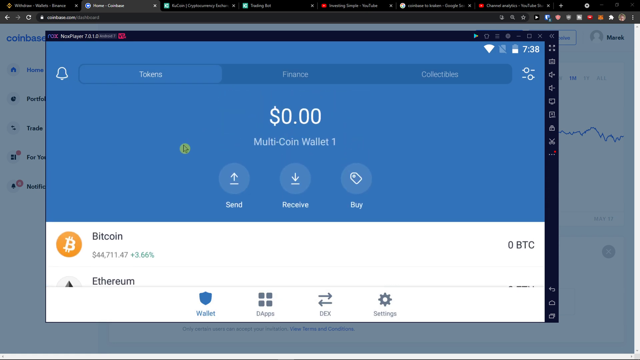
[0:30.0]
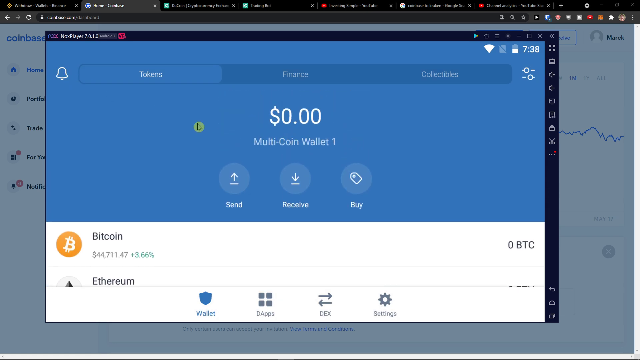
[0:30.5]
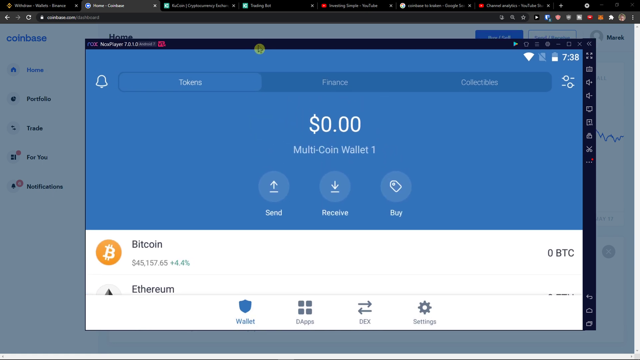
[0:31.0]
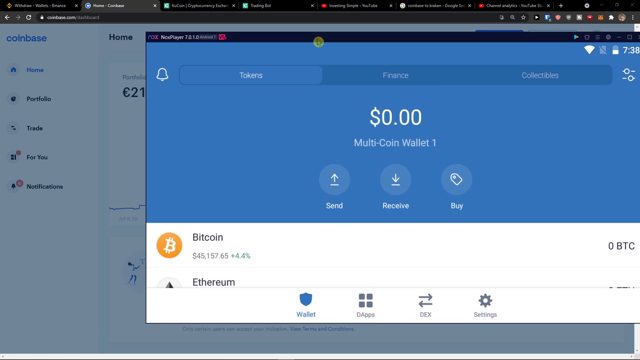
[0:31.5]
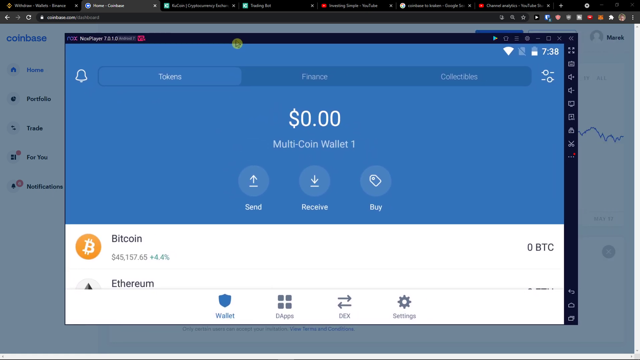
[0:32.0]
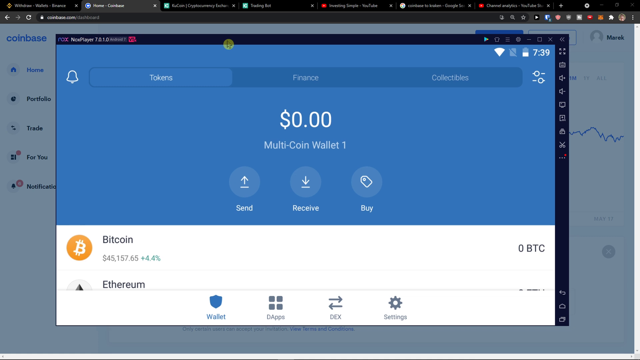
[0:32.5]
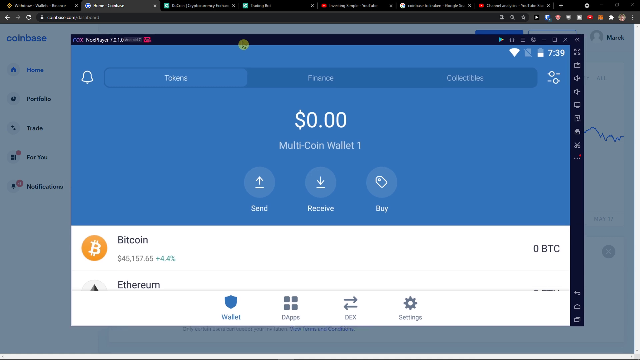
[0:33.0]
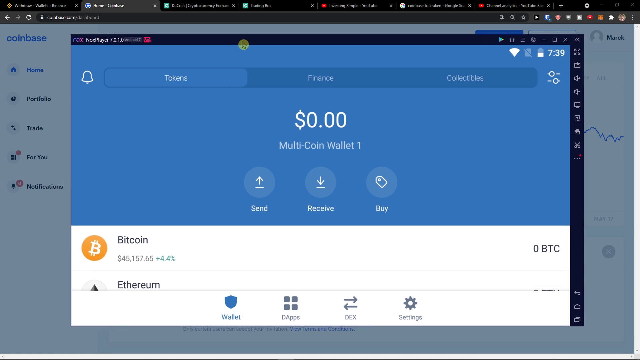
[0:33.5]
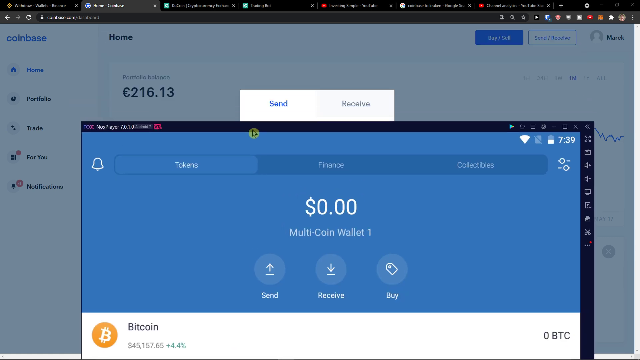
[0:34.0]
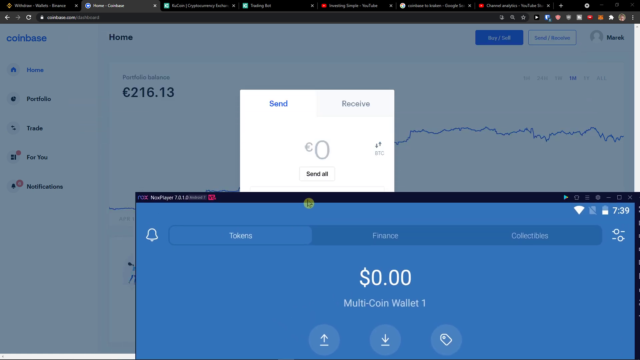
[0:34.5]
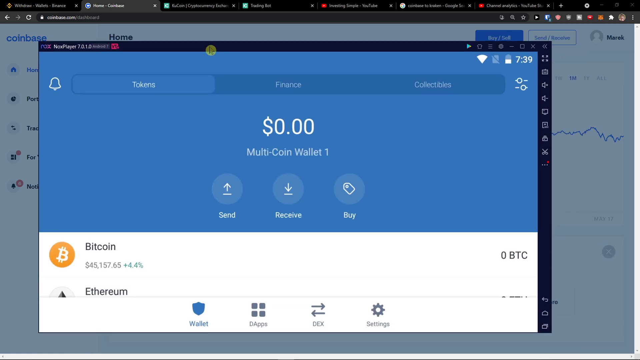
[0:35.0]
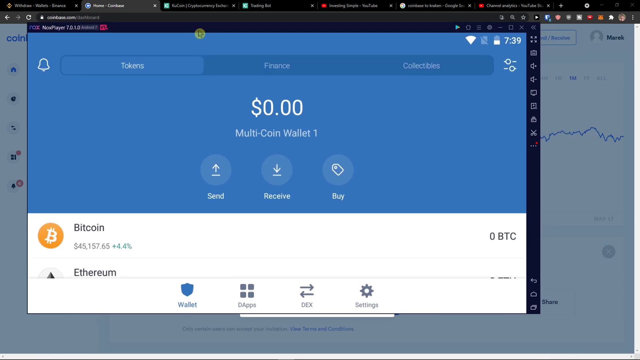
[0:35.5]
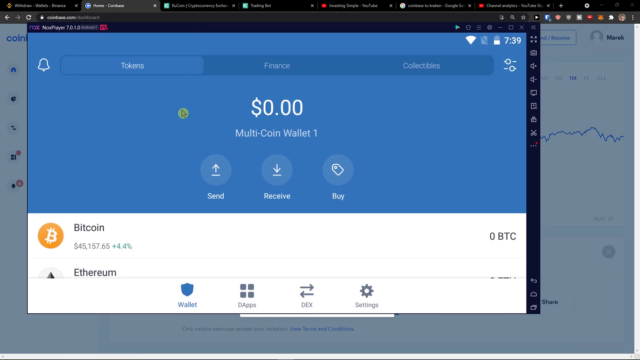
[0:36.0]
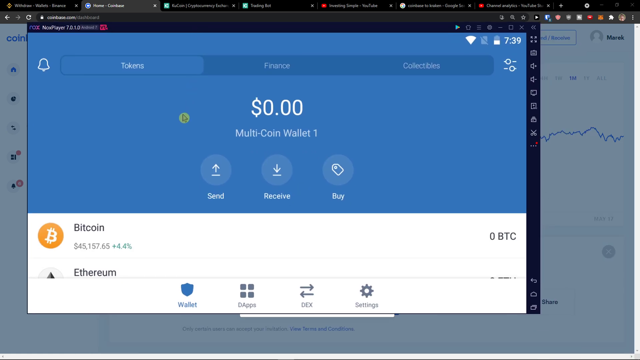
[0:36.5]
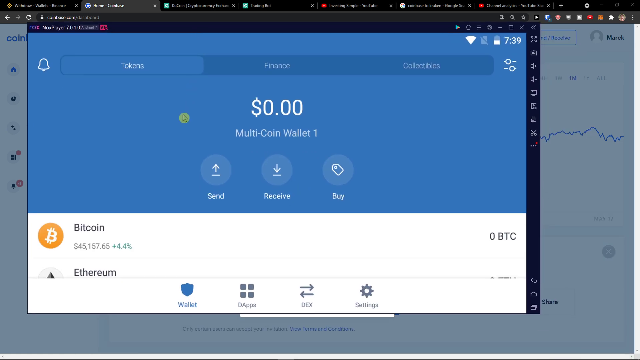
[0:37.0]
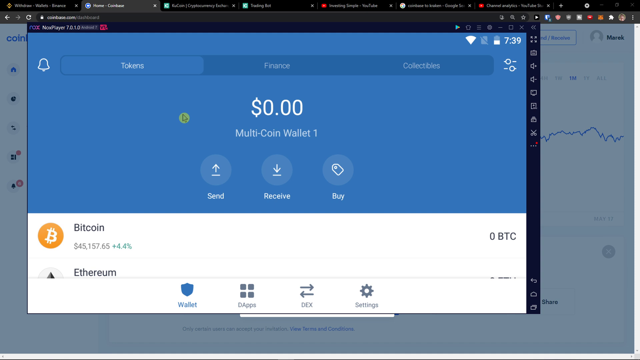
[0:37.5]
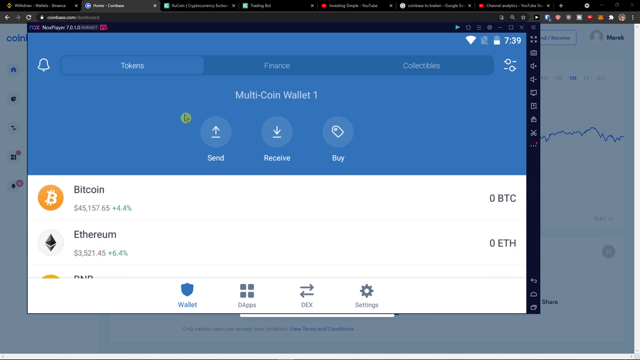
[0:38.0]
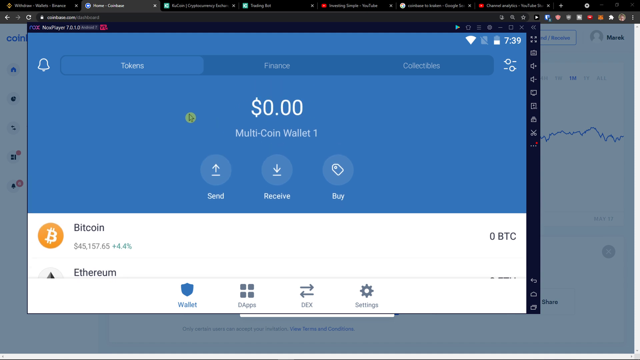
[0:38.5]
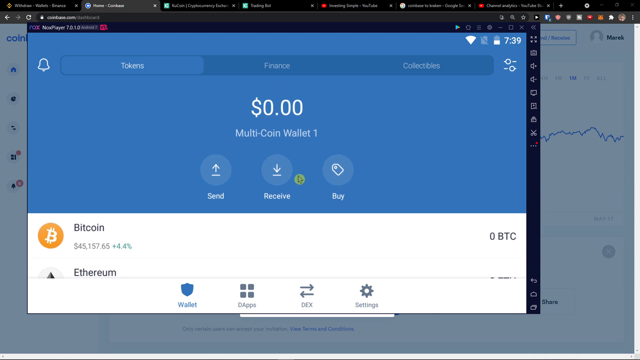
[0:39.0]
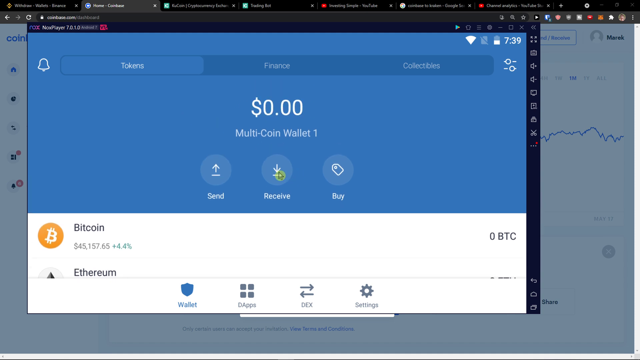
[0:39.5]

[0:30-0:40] A window within a window is shown: an unused window in the back apparently says "Coinbase", and a bigger window in front is the one being worked in. Seemingly using the mouse, the person grabs the black part at the top of the front window, possibly a thick border, and moves the window to the left and then to the right to show that it can be moved around the screen. A little yellow circle shows where the mouse cursor is as it moves back and forth. Inside the window are "$0" and "MultiCoin Wallet 1", and three round icons labeled "Send", "Receive" and "Buy", with "Bitcoin" underneath. The window keeps being moved around and ends up at the top. The cursor goes over "Receive" and clicks.